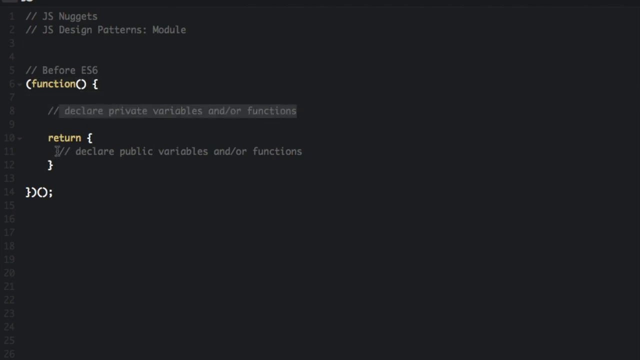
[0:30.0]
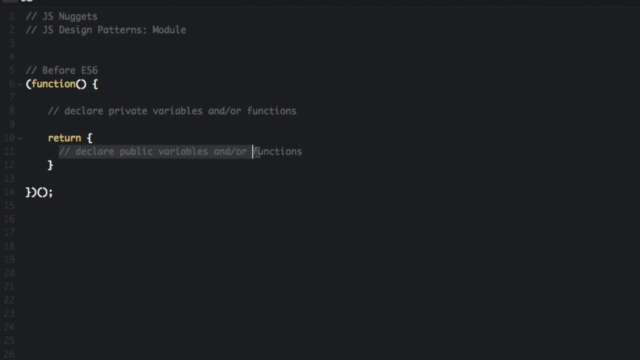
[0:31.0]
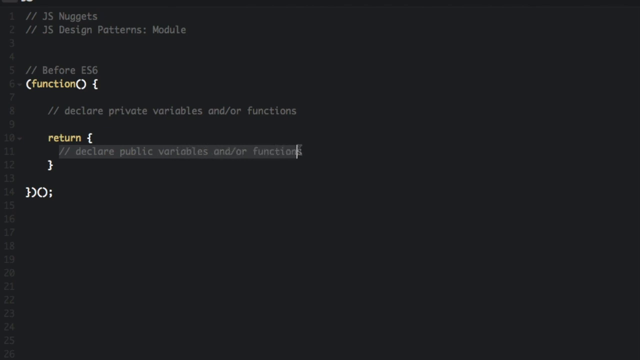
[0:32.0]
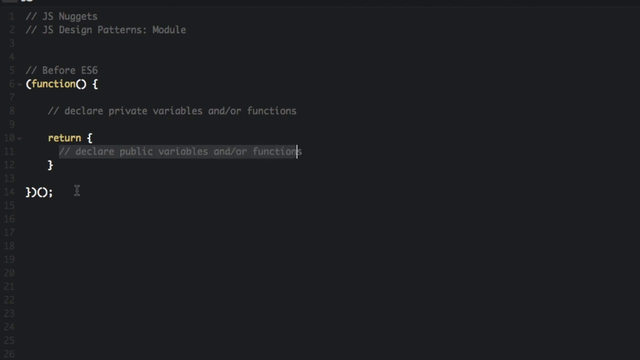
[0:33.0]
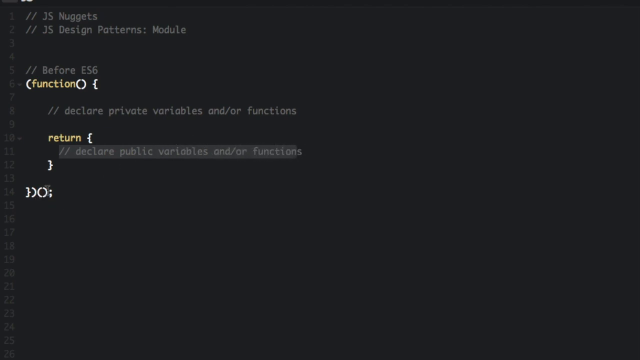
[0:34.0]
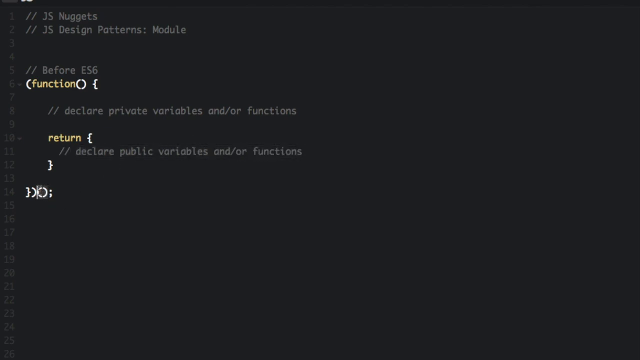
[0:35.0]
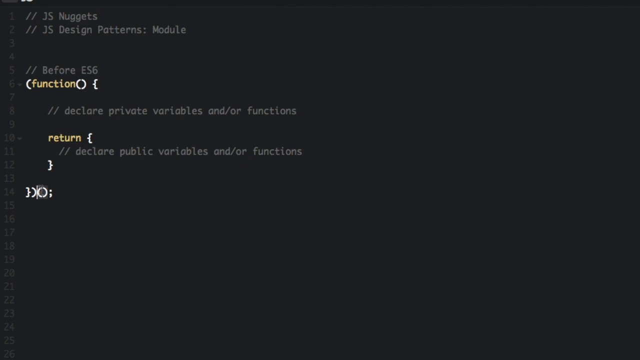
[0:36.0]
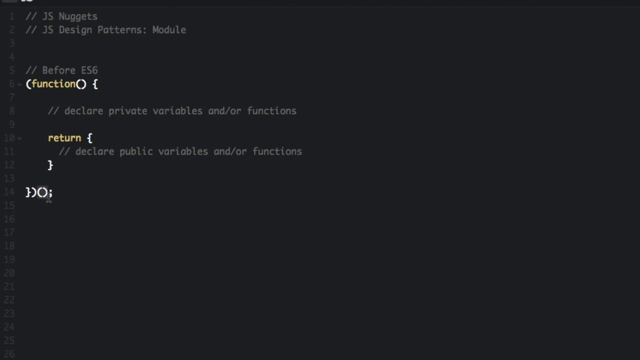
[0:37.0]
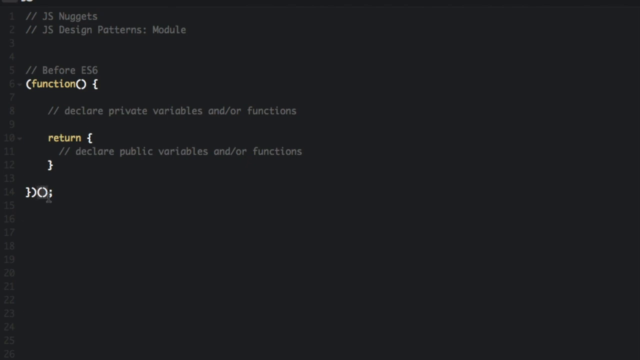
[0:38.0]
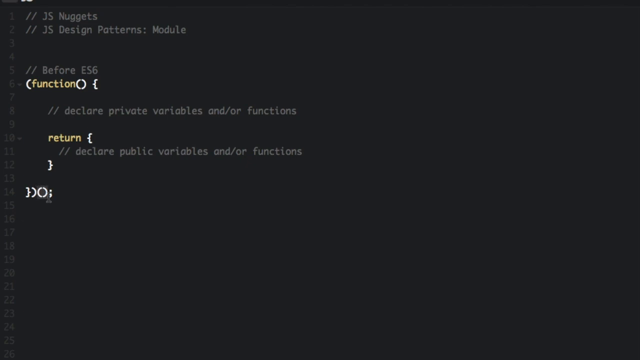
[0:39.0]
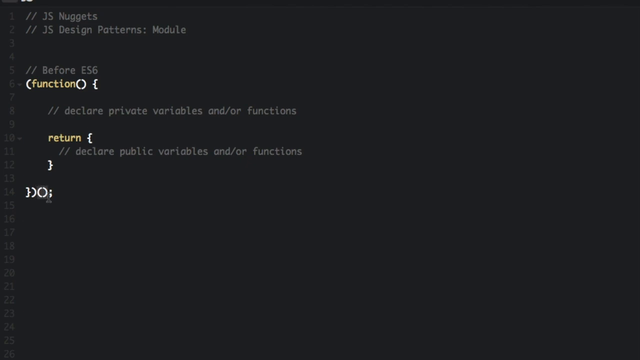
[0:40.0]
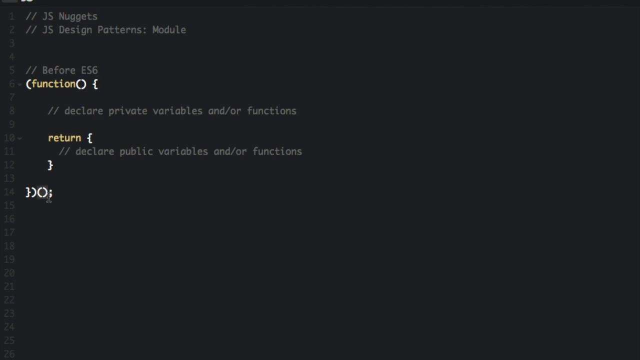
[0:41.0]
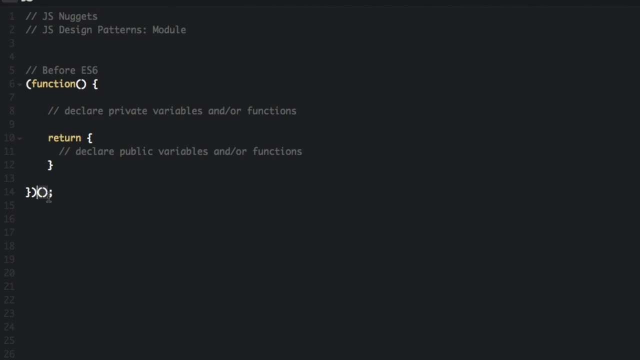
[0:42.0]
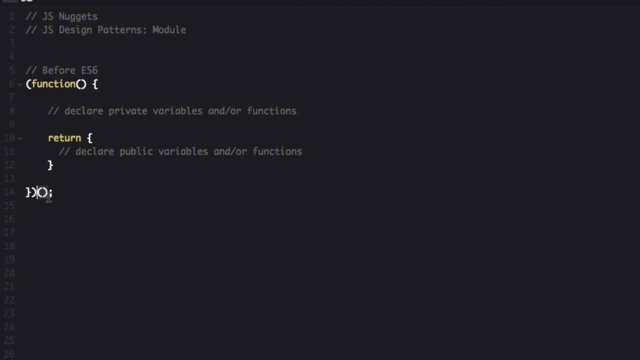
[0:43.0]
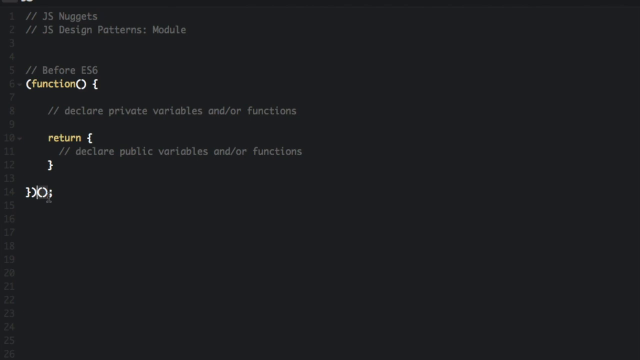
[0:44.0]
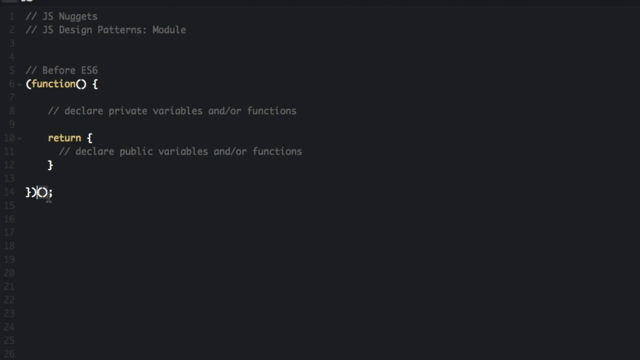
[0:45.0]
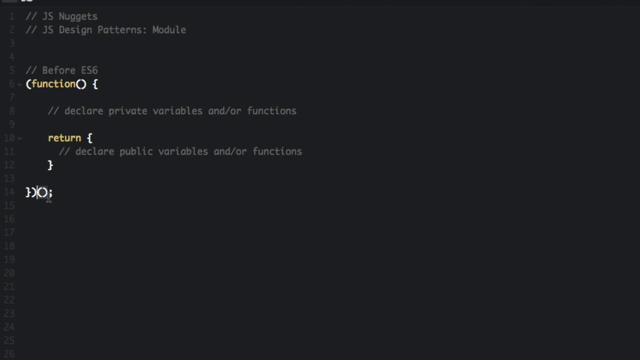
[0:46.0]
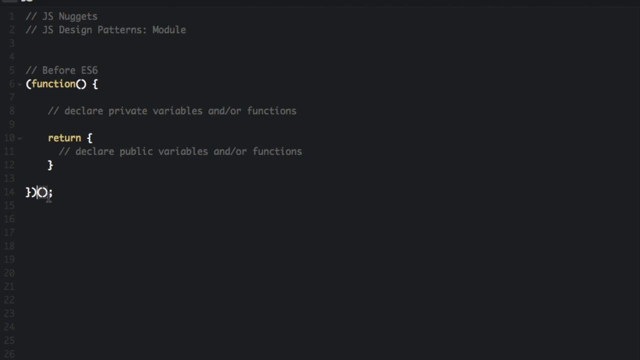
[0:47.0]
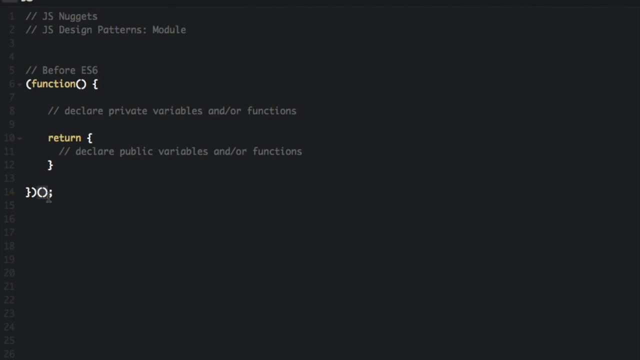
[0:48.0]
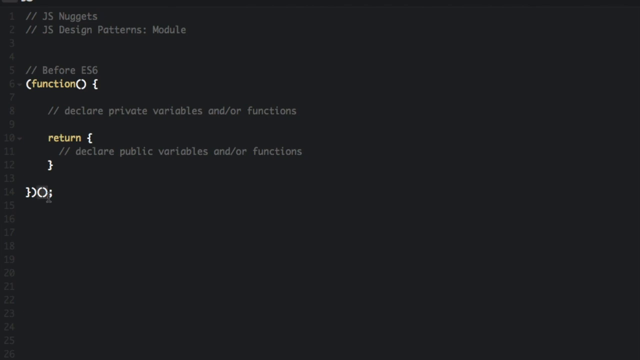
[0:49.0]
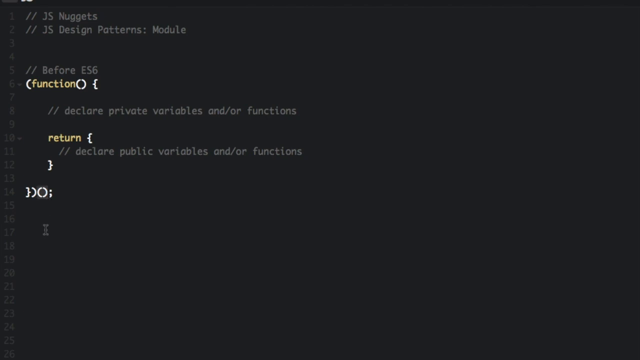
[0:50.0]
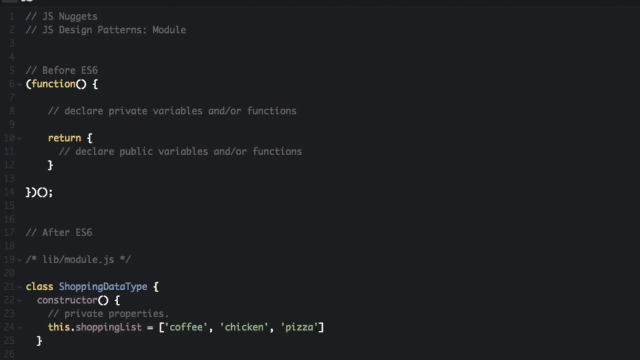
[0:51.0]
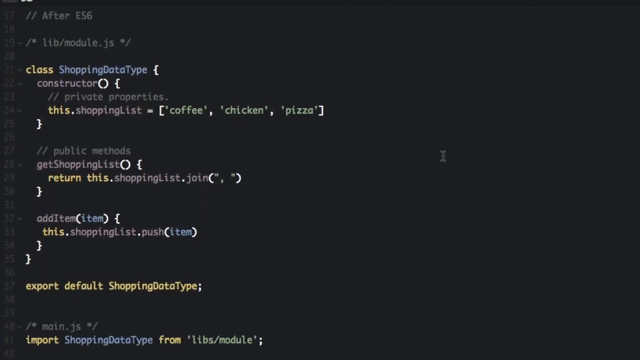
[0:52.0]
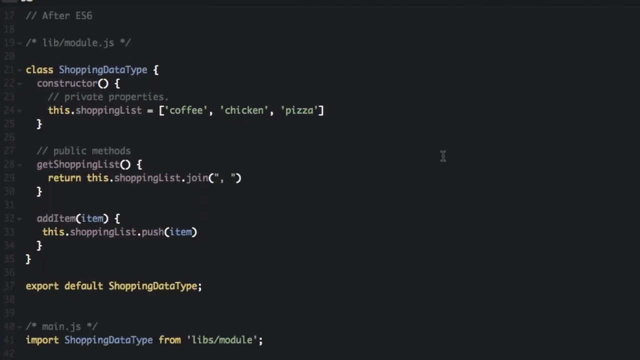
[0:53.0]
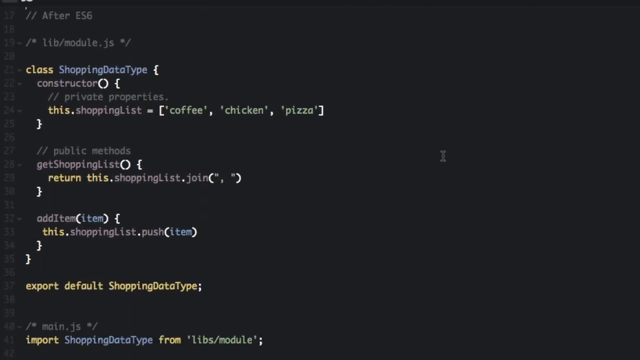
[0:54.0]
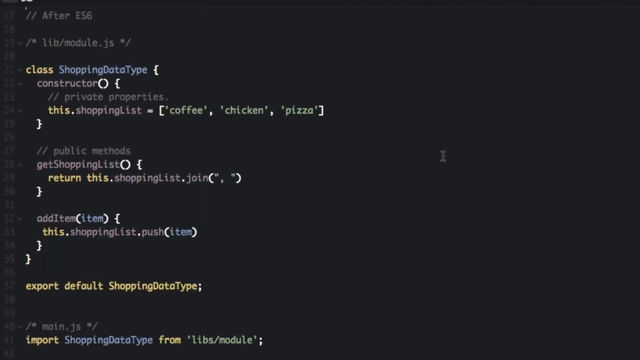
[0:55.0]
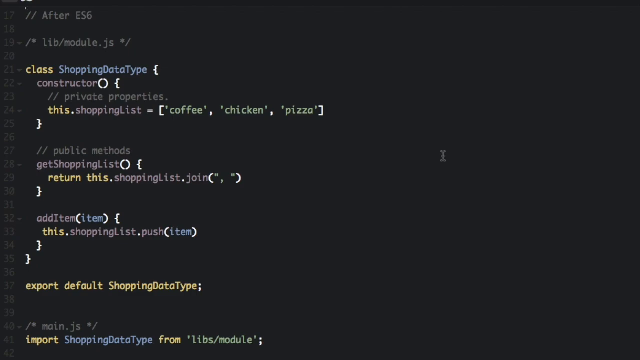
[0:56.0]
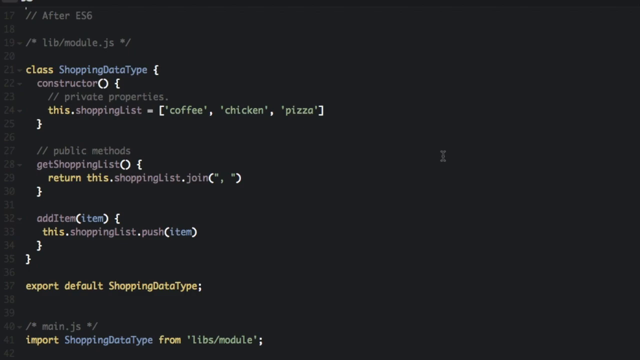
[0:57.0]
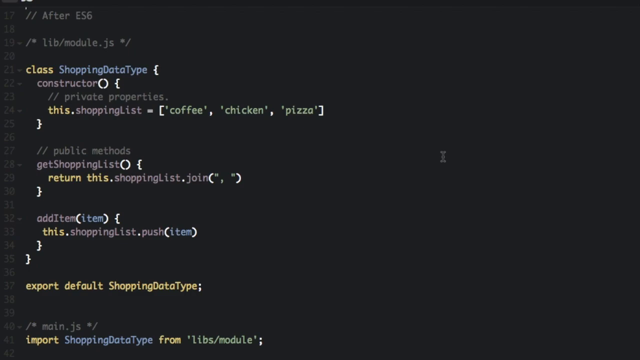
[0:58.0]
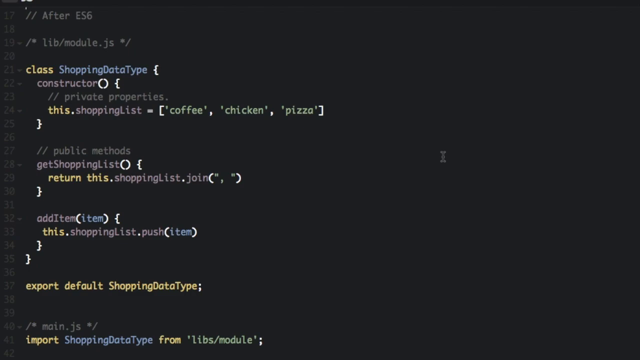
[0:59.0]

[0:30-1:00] The code has progressed a little. Line 5 reads "// B4 ES6". On line 6, a small faded arrow pointing down is next to the 6, just as faded as the number. To its right is a right-facing parenthesis mark in white, then the word "function" in yellow lowercase letters, followed by a parenthesis facing right and another closing it directly after, facing left, then a space and a different type of colon. Line 8 has two forward slashes and a grayed box that says "declare private variables and / or functions" in gray letters; the forward slashes on this line are also gray. The next line has "return" in yellow with an open colon in white. The line under that reads "// declare public variables and / or functions", with no gray box this time, and a closed white parenthesis immediately after it.